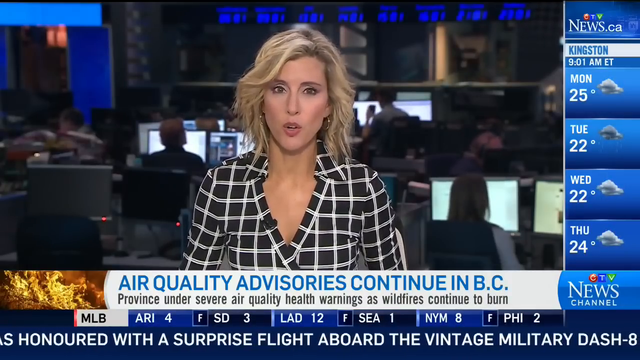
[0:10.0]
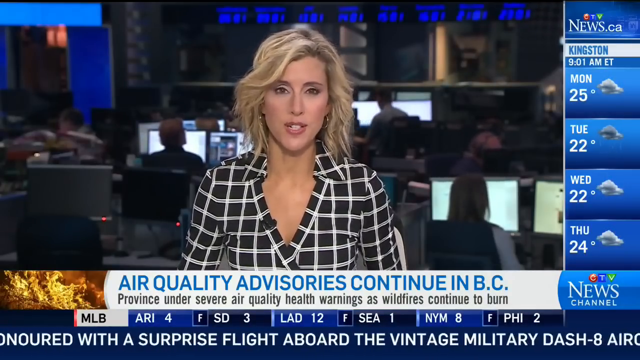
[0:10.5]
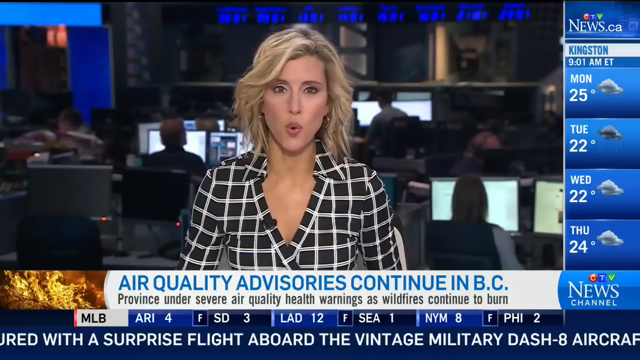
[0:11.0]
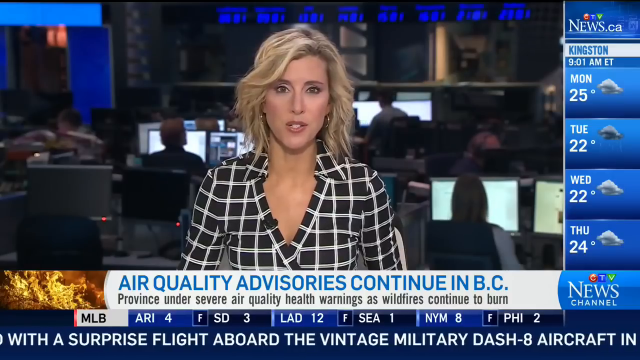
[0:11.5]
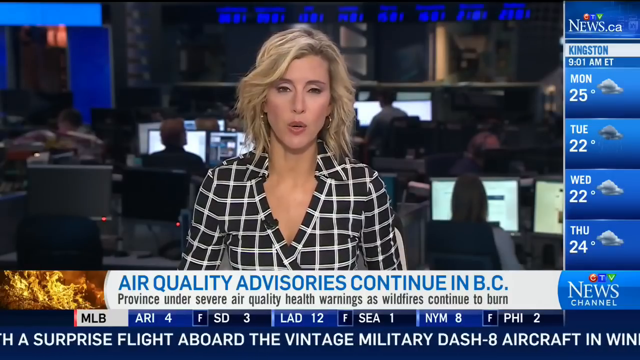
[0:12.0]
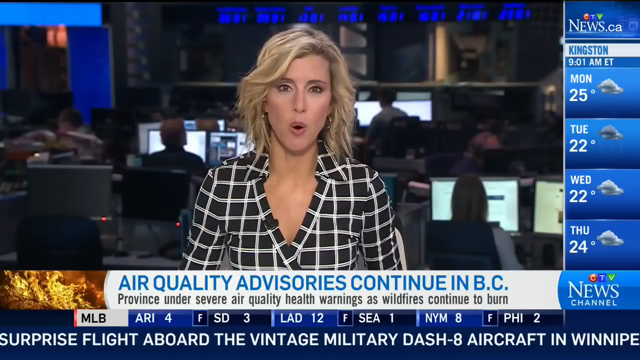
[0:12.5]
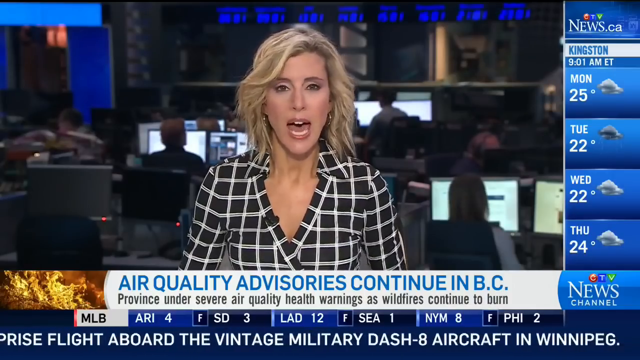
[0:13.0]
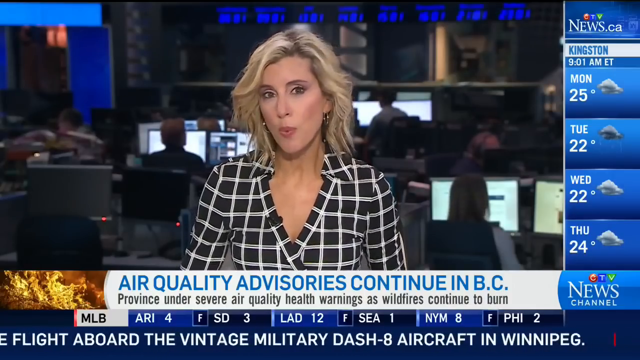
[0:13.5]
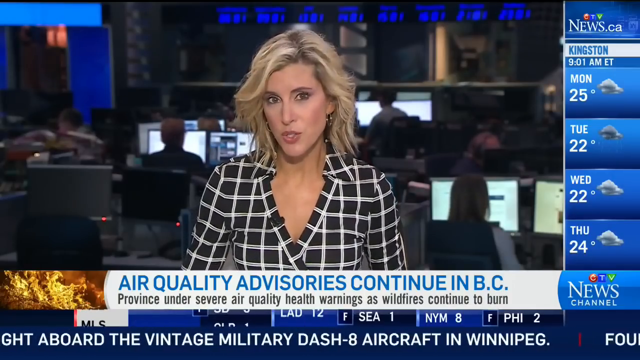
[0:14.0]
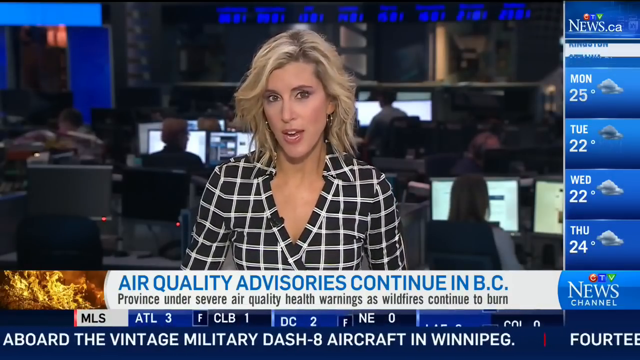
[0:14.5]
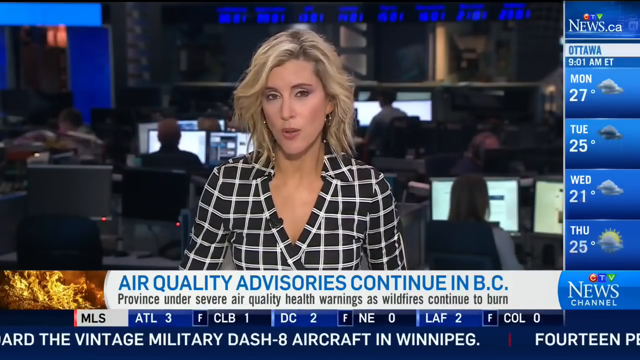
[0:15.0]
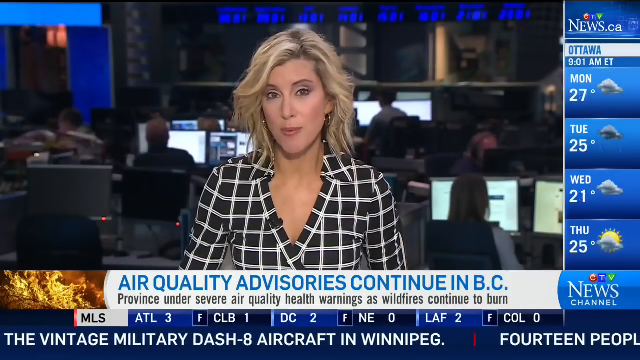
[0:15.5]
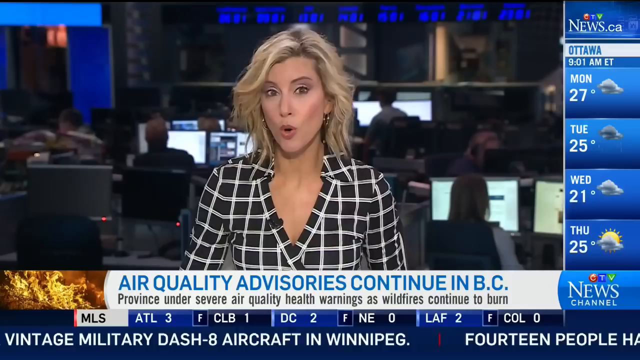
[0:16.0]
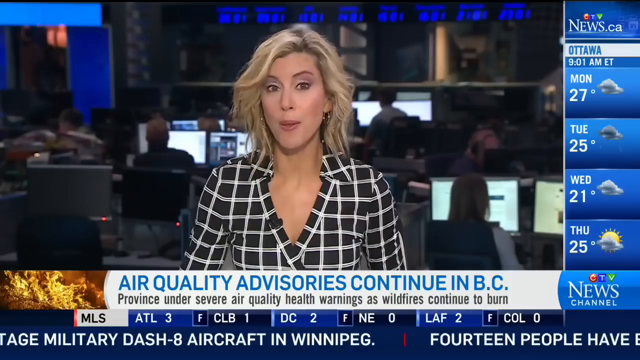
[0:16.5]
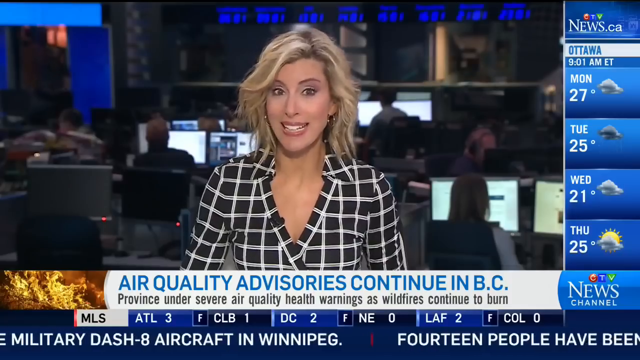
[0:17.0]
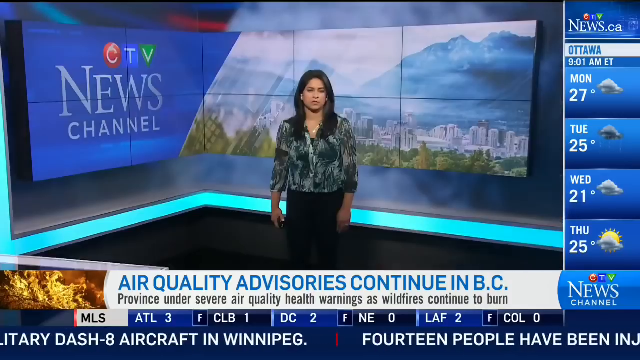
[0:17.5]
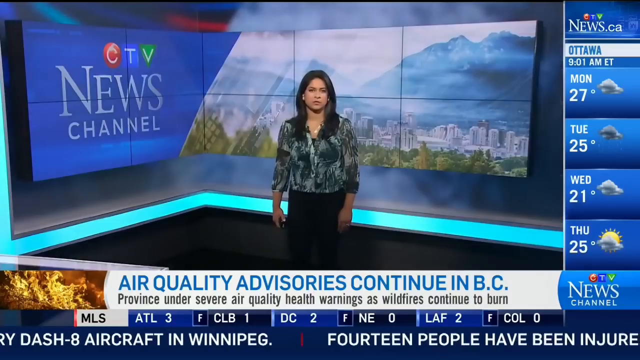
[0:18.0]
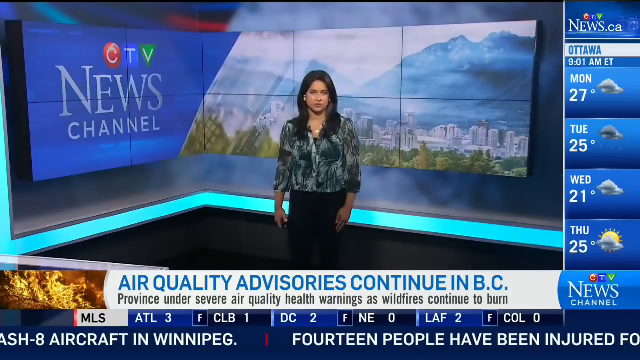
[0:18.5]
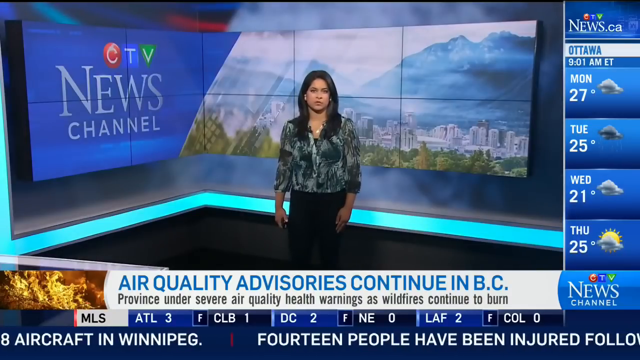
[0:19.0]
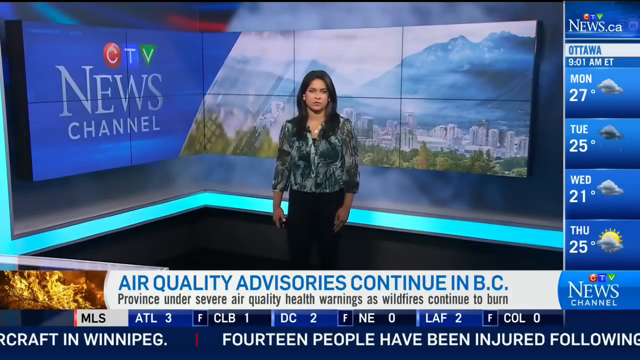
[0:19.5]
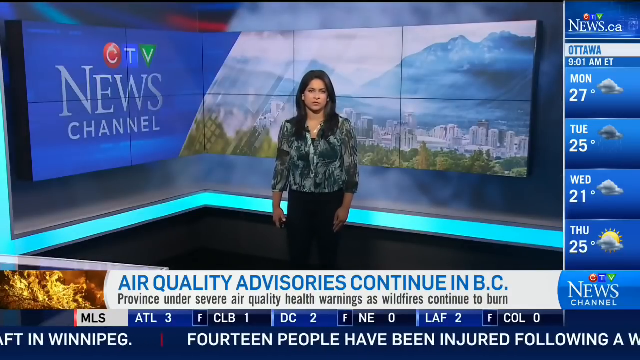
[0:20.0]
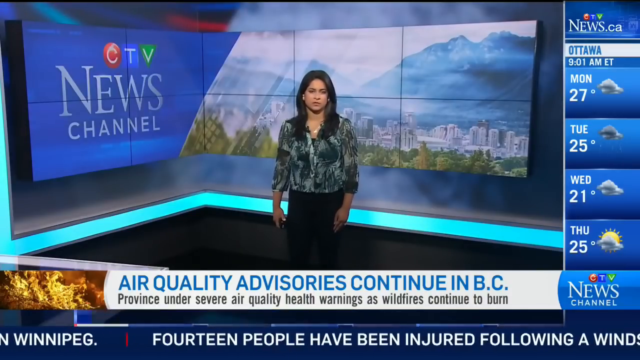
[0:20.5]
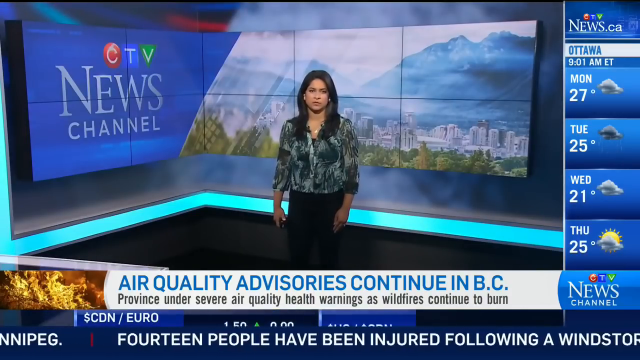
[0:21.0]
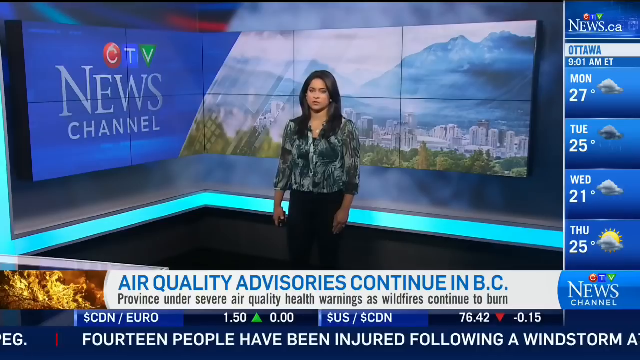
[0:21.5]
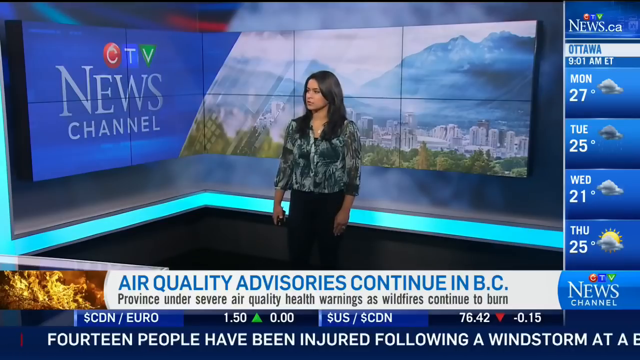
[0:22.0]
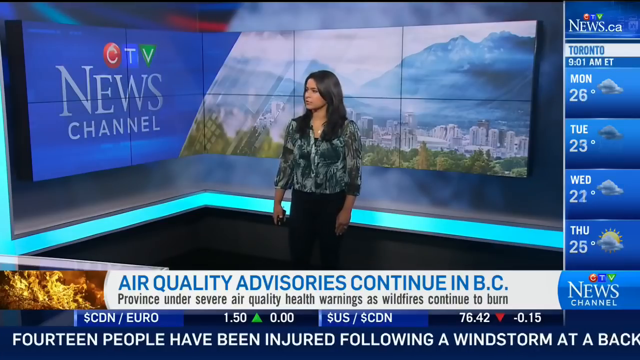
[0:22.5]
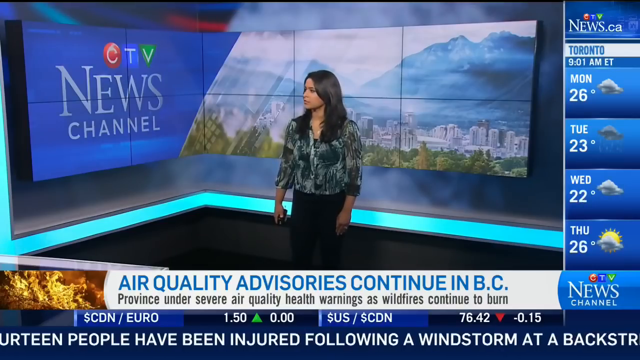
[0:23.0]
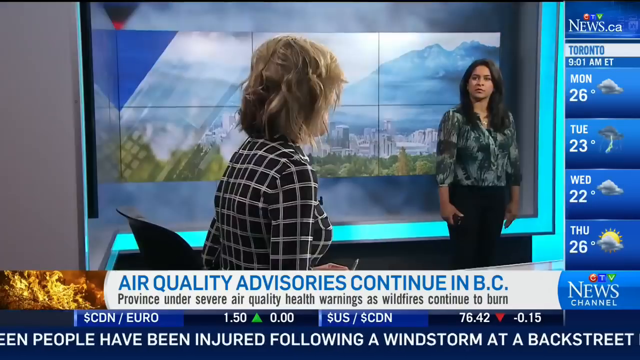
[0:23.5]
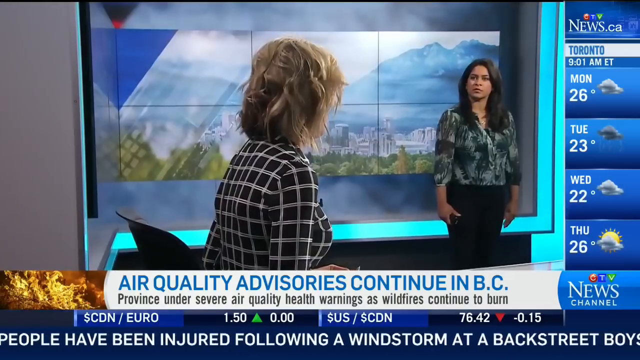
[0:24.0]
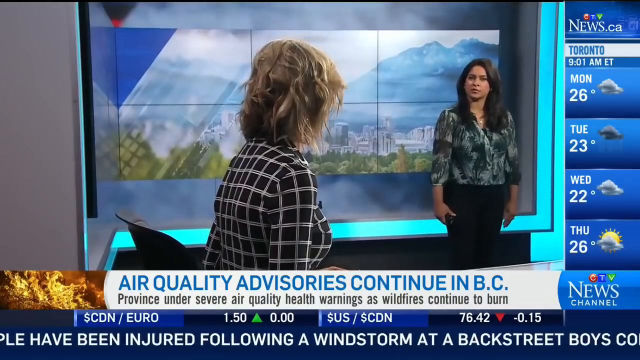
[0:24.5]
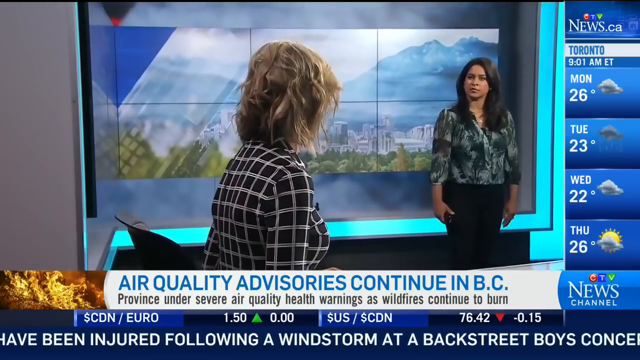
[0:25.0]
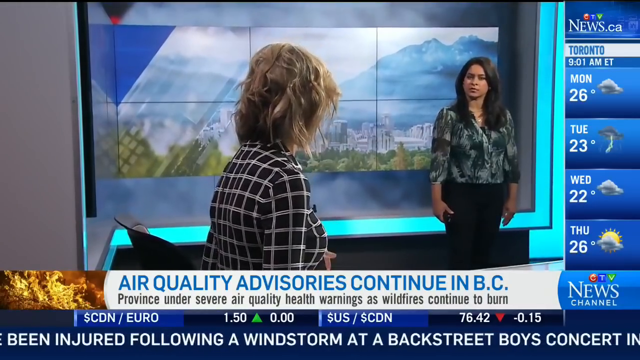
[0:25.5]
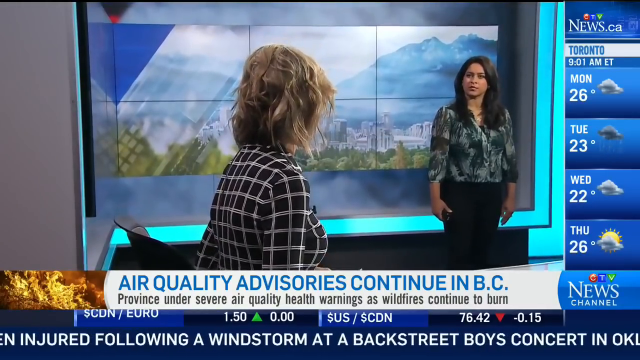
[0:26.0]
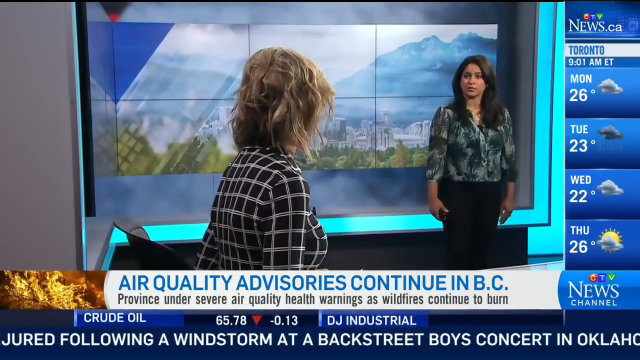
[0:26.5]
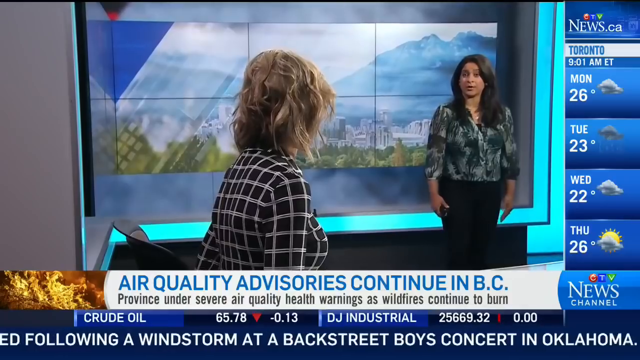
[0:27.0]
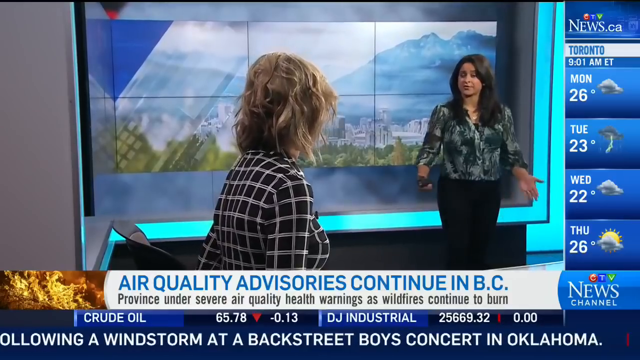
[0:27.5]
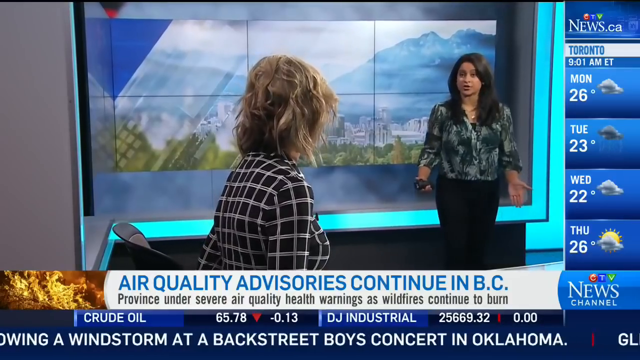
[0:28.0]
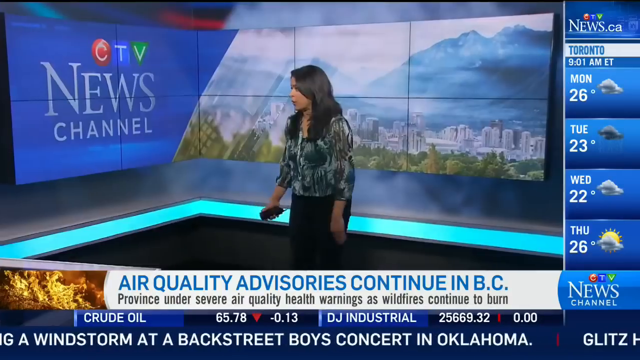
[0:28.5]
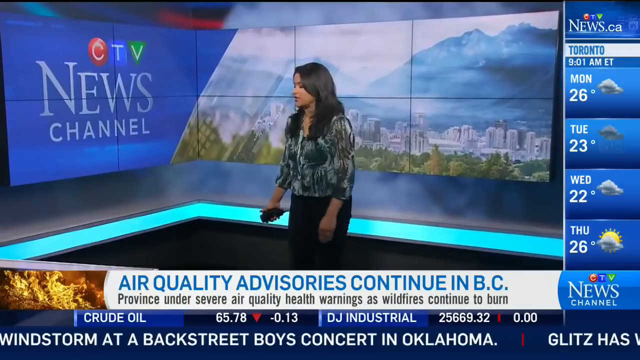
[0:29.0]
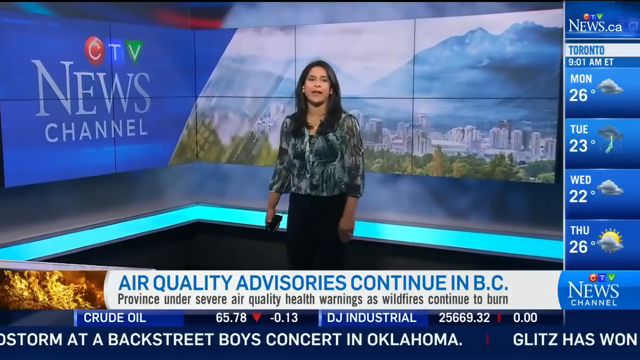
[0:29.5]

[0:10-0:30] The news presenter wears round gold earrings. A different person is standing up: a female with black hair wearing a green t-shirt with flower designs and black trousers. Behind is a corner wall of the room with a set of 10 monitor screens placed next to one another in two rows, five by five, reading "CTV news channel". The second person is in the same area as the first presenter, and they talk to one another, probably about the headlines about the air quality advisories in BC. At the bottom are the scores of different teams in the MLS league: "ATL 3 - CLB 1", "DC 2 - NE 0", "LAF 2 - COL 0". On the right side is the weather in Toronto.